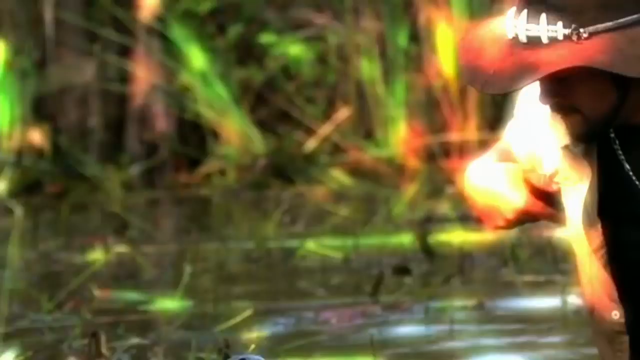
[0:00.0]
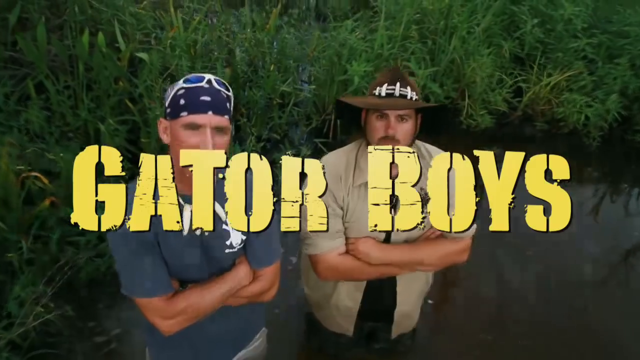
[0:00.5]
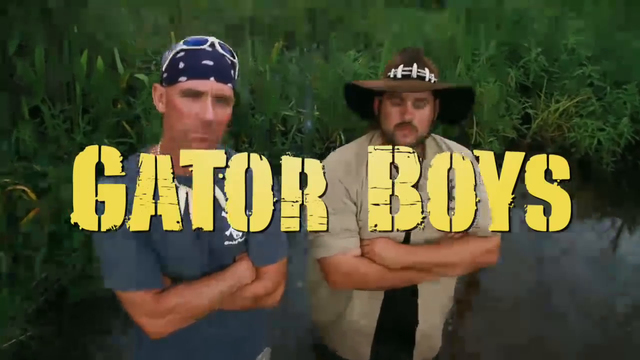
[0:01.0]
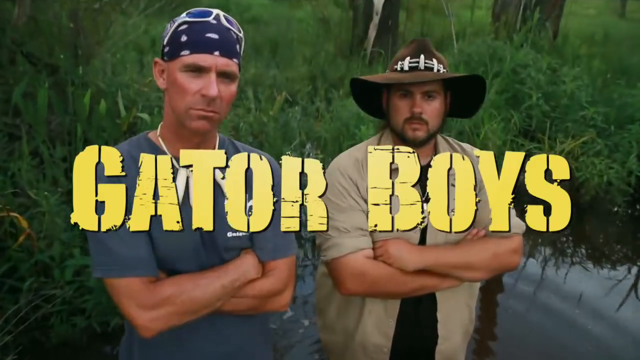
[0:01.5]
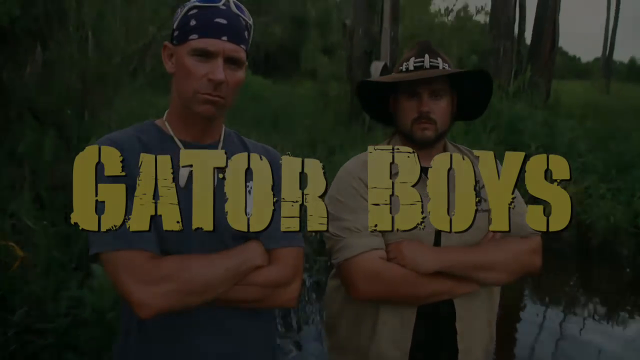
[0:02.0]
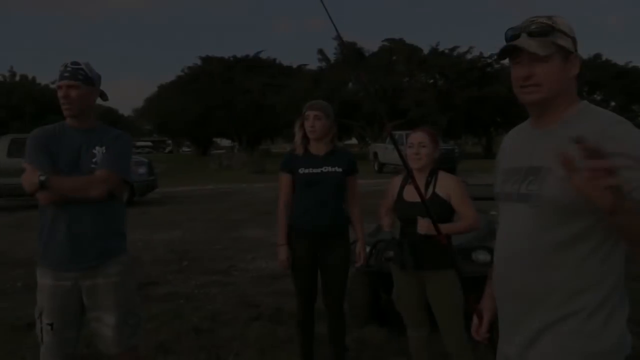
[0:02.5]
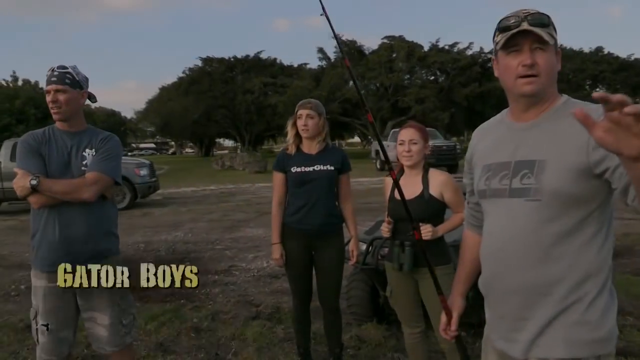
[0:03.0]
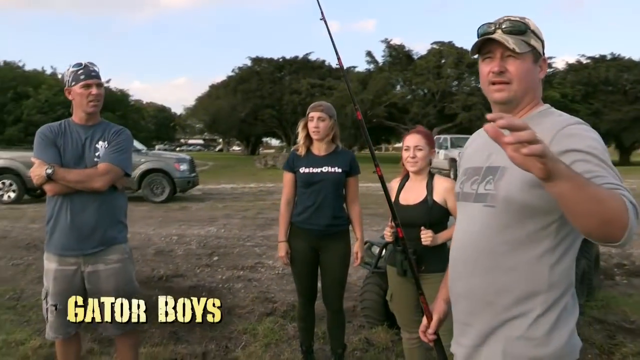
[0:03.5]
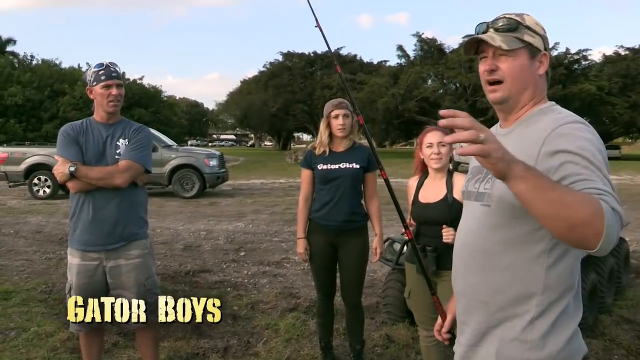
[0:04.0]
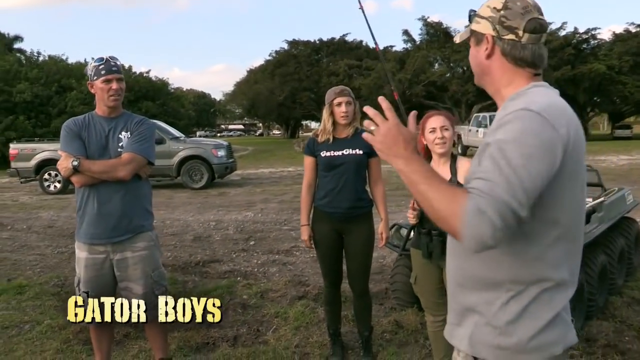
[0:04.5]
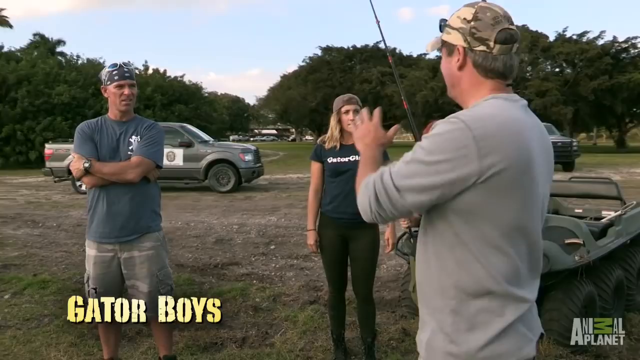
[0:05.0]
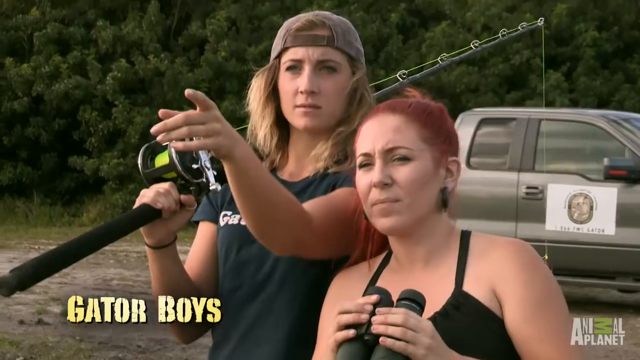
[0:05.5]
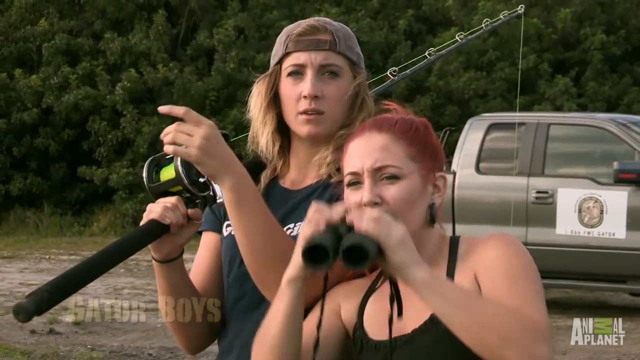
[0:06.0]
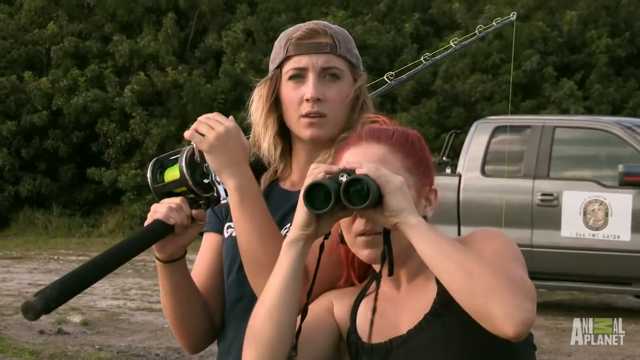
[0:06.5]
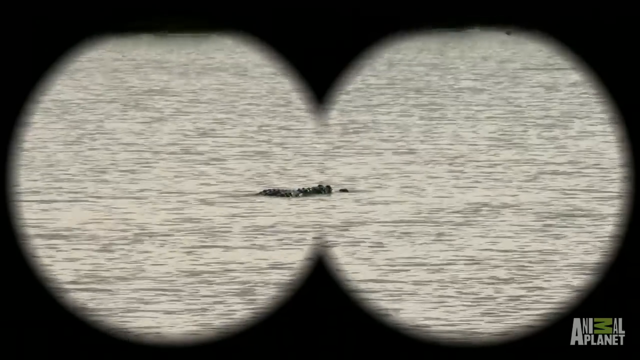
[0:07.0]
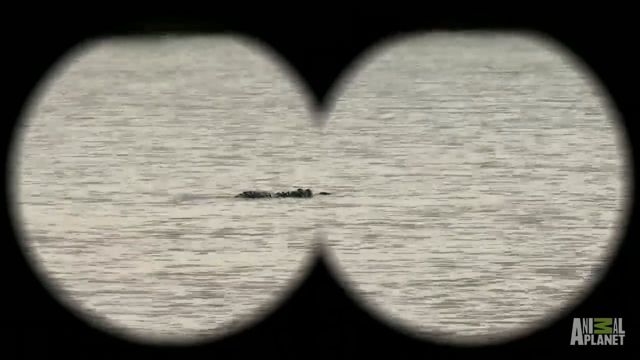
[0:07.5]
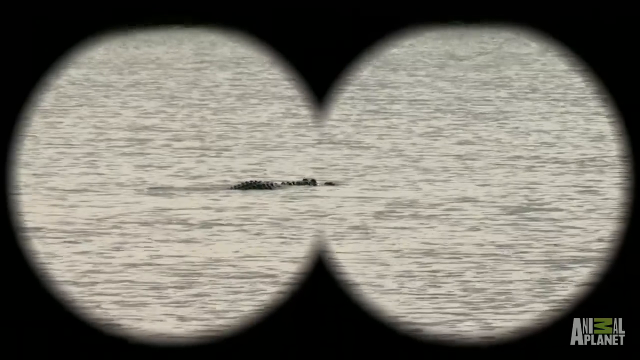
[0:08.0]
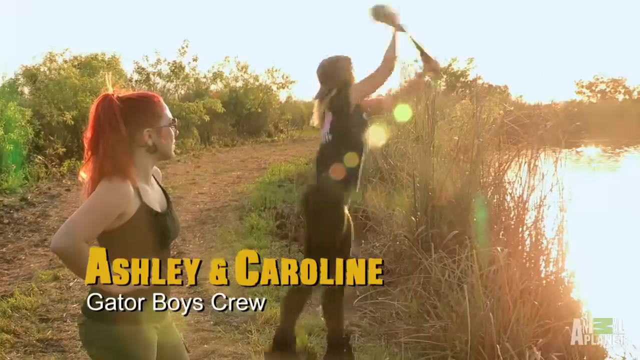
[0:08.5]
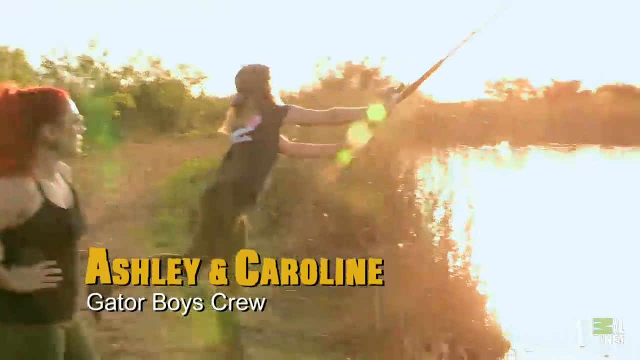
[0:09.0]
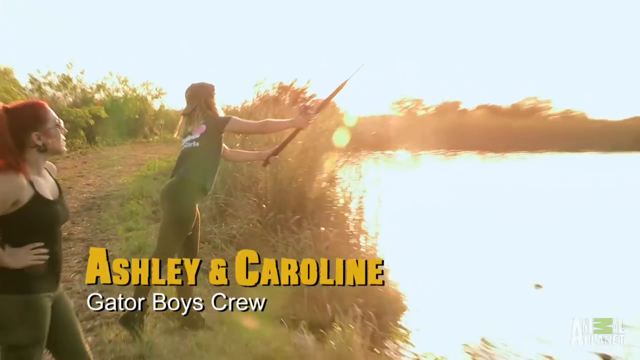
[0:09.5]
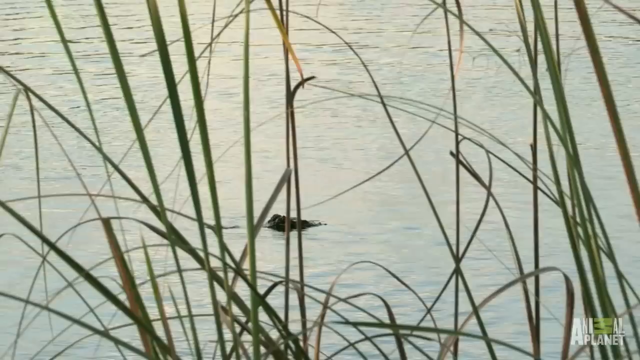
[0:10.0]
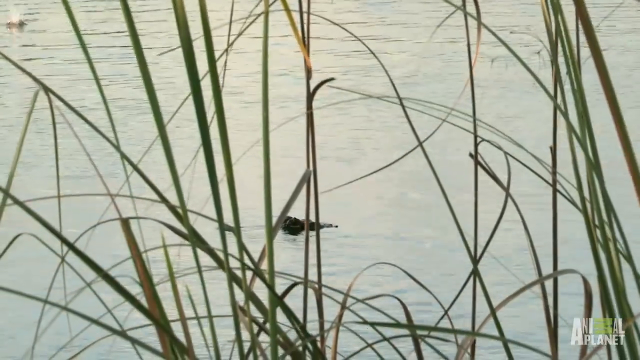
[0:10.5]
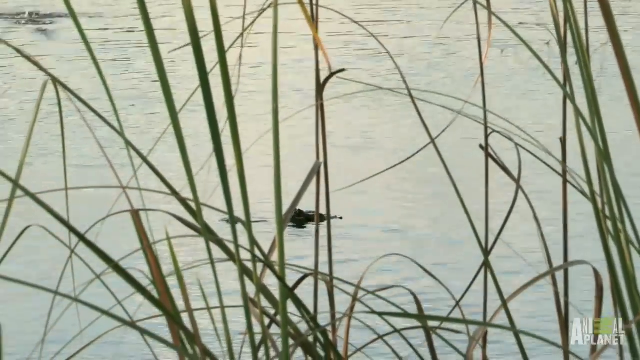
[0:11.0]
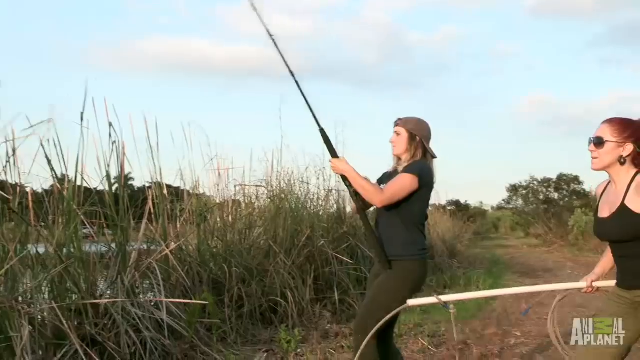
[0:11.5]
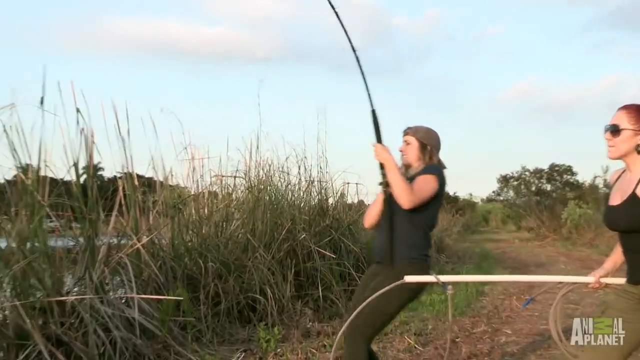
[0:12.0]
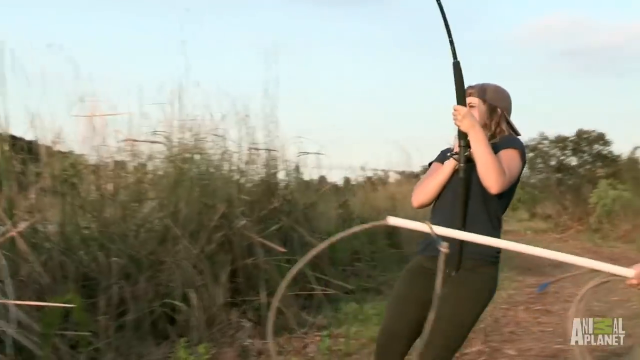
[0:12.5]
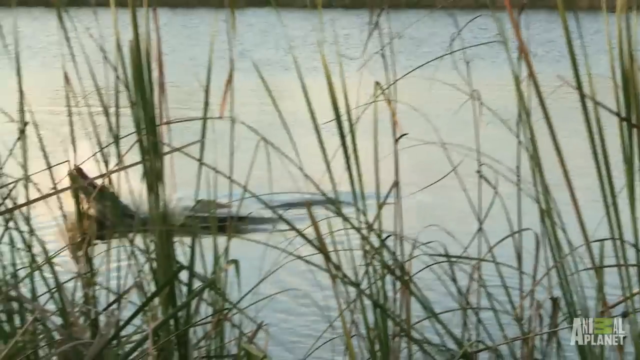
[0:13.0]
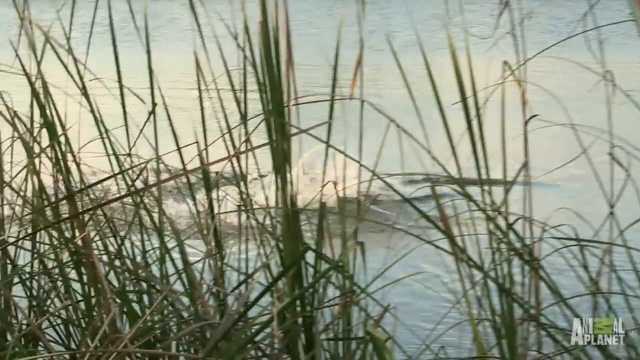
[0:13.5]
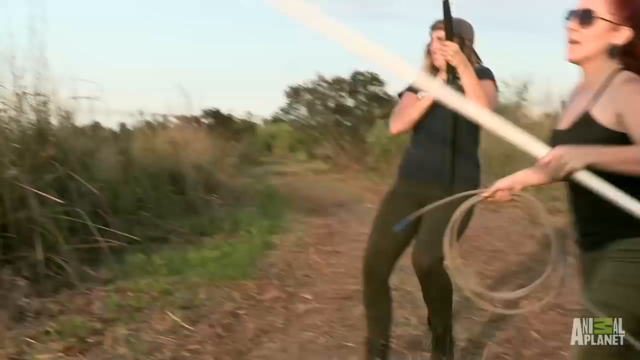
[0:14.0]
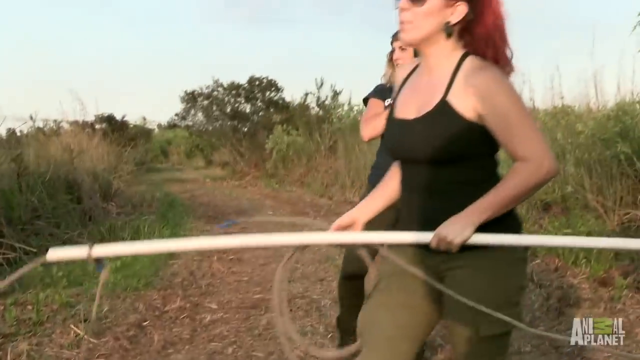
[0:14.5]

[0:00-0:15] On-screen text reading "gator boys" appears over two men. The man on the left wears a blue bandana with sunglasses over it on his forehead; he looks maybe in his 40s and wears a bluish gray shirt. Next to him on the right is another man who looks possibly in his 30s, wearing a kind of Australian outback-style brown hat, a short beard and a button-up tan shirt. Both have their arms crossed. The camera pans down as the yellow text "gator boys" floats over them. The scene then switches to four people: a man on the left, two women in the middle, and another man on the right, closest to the camera.